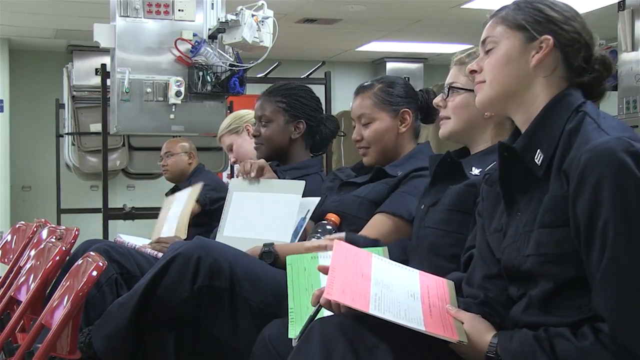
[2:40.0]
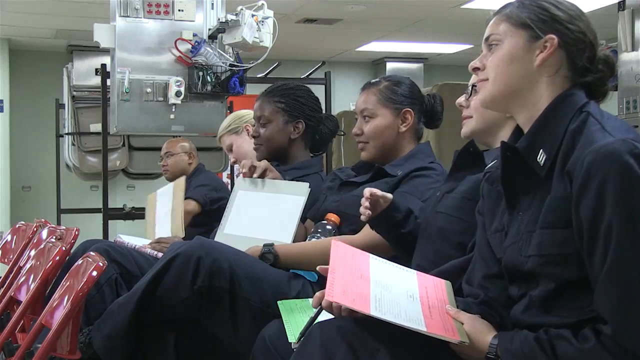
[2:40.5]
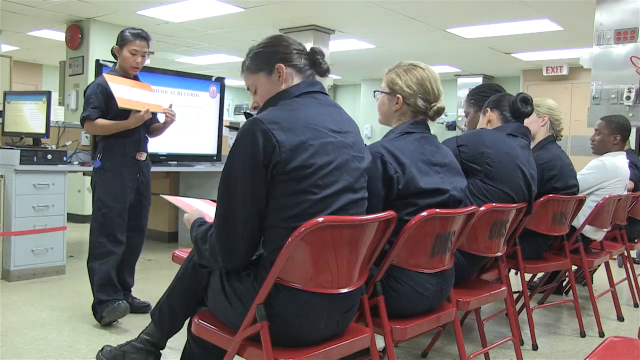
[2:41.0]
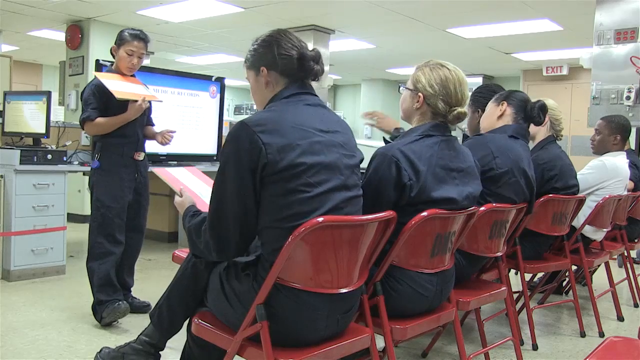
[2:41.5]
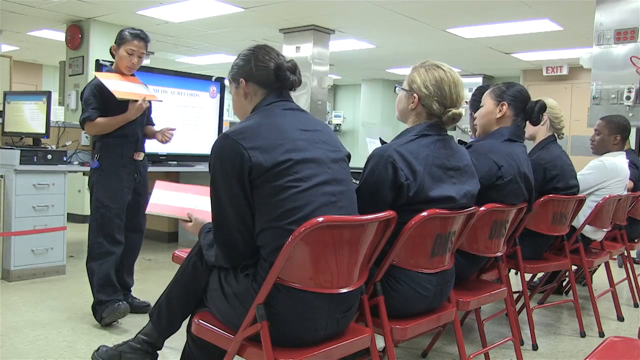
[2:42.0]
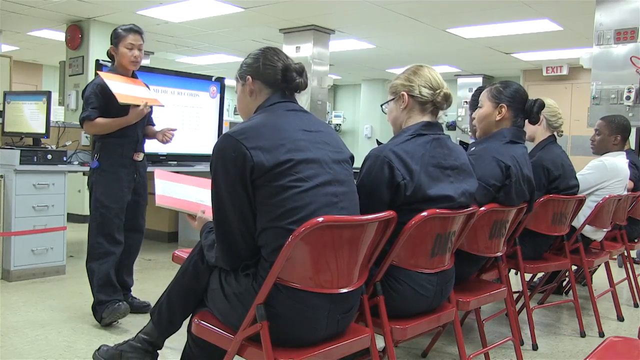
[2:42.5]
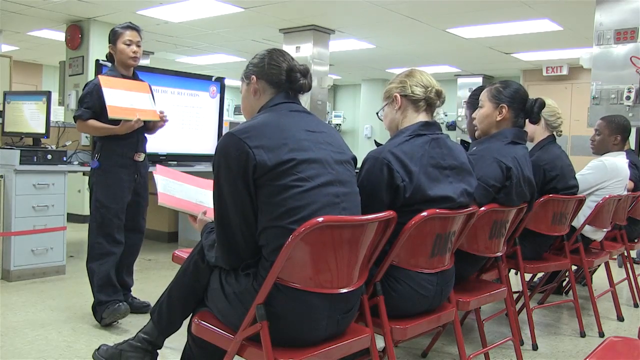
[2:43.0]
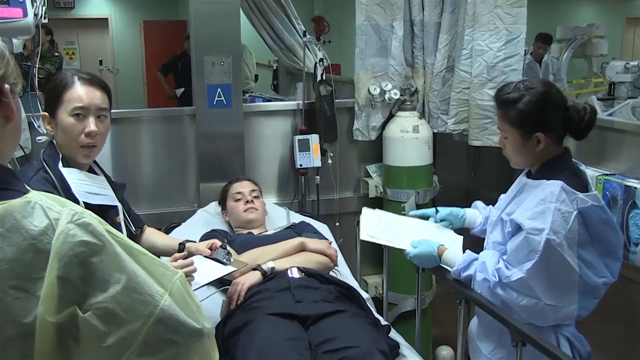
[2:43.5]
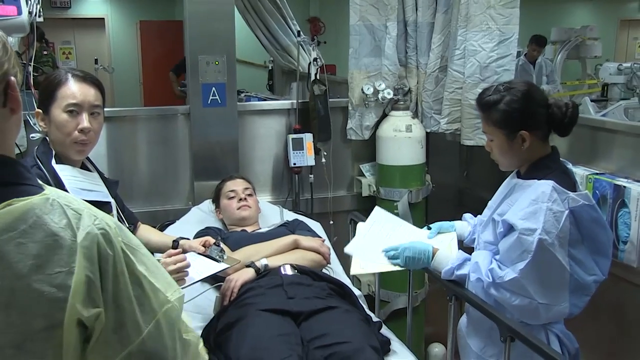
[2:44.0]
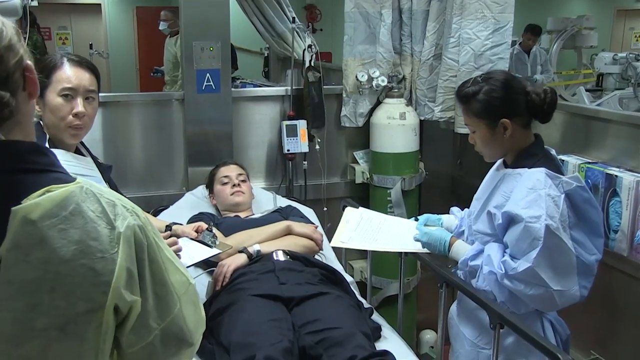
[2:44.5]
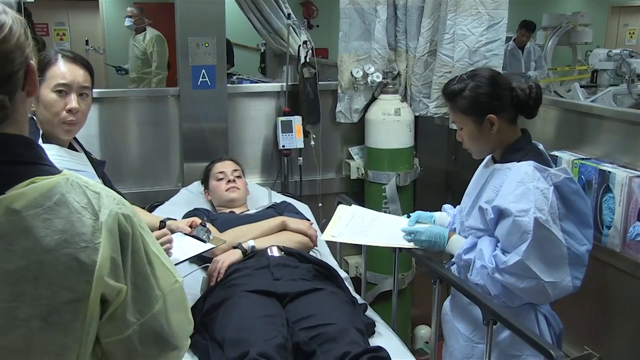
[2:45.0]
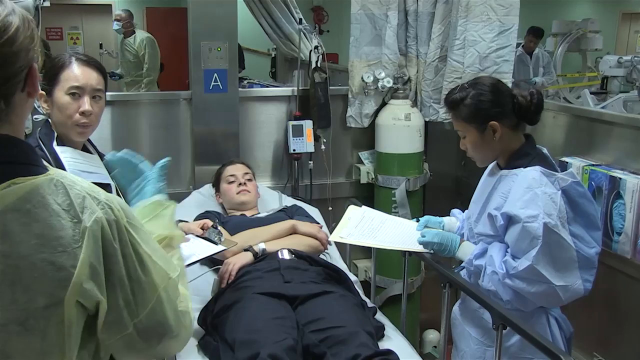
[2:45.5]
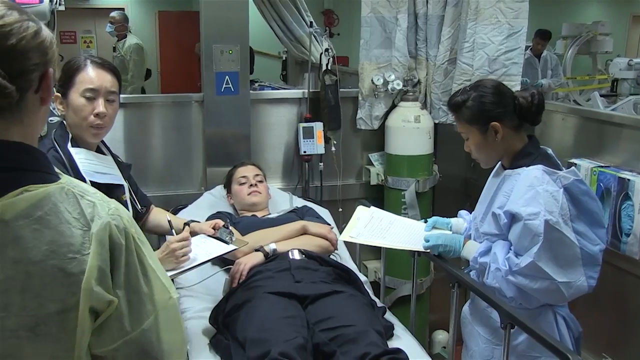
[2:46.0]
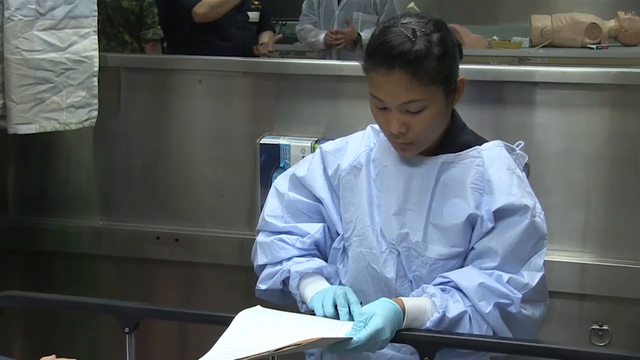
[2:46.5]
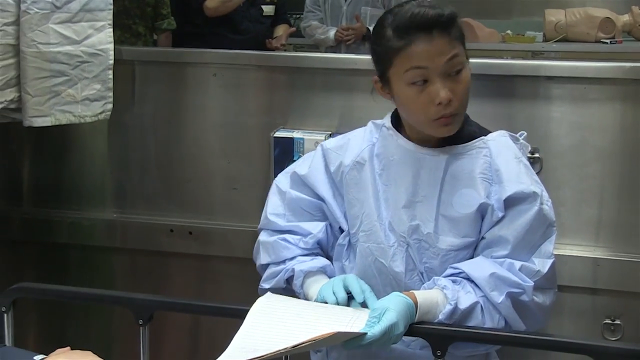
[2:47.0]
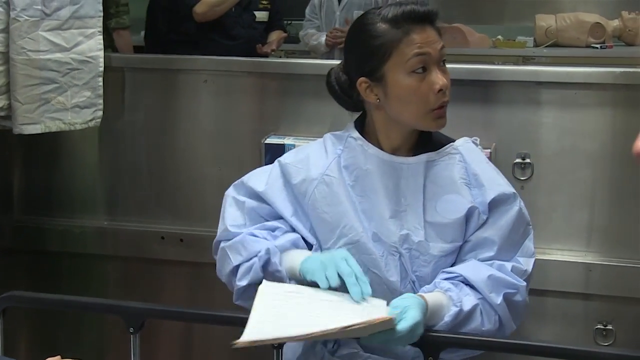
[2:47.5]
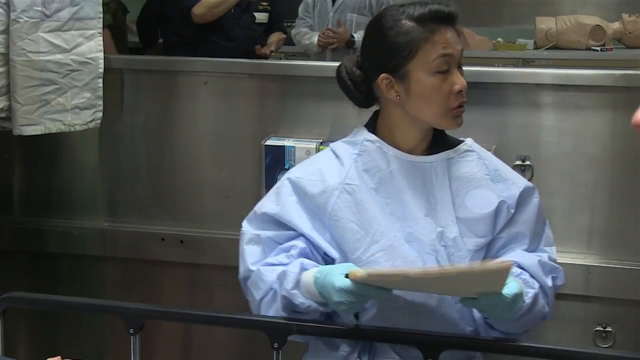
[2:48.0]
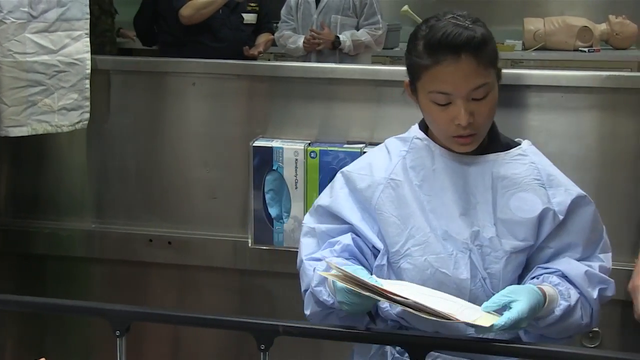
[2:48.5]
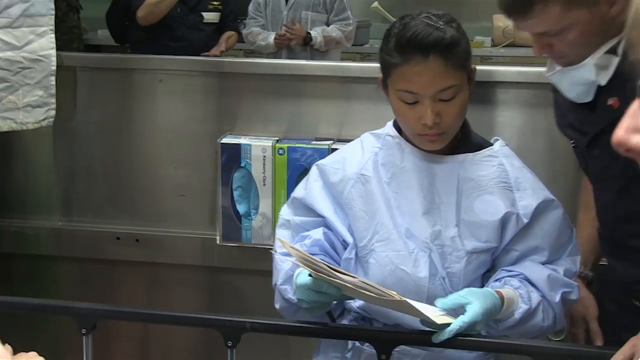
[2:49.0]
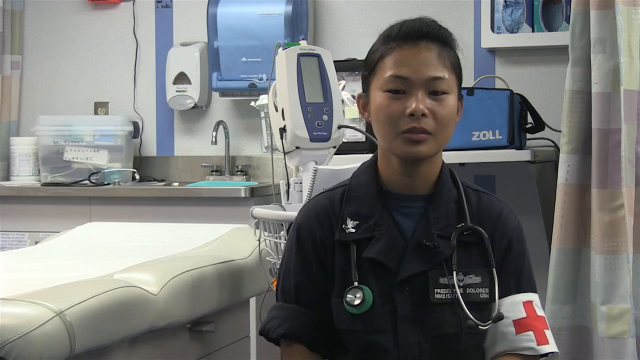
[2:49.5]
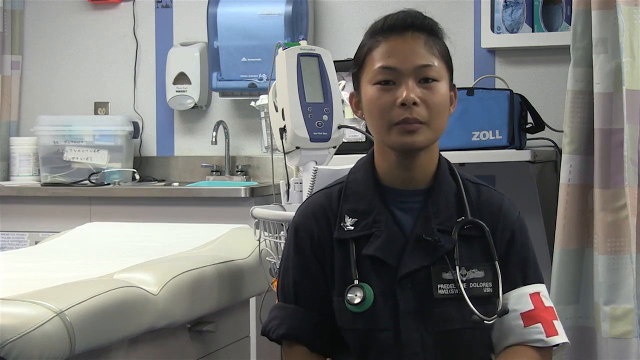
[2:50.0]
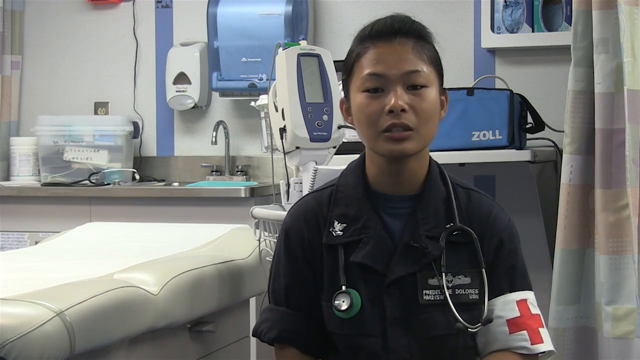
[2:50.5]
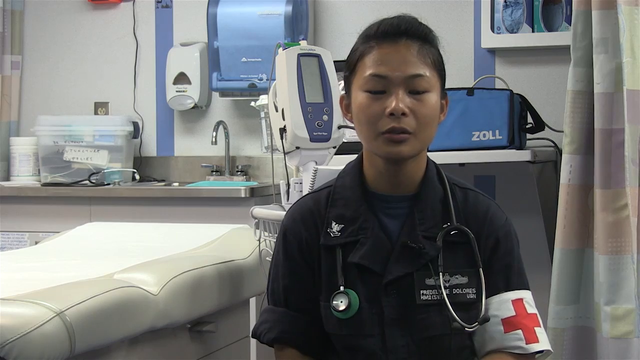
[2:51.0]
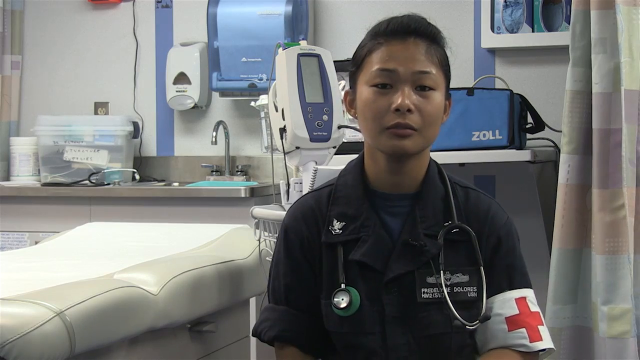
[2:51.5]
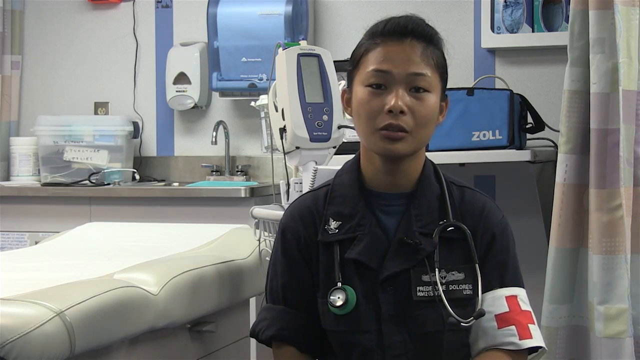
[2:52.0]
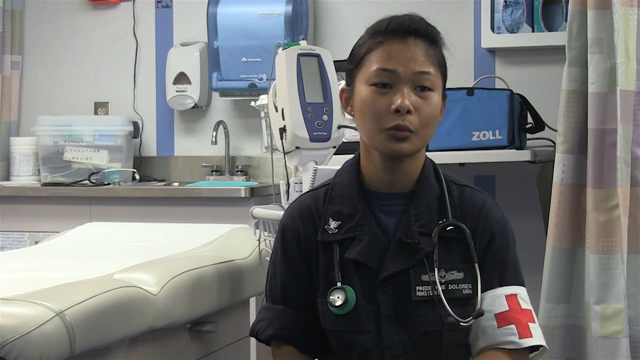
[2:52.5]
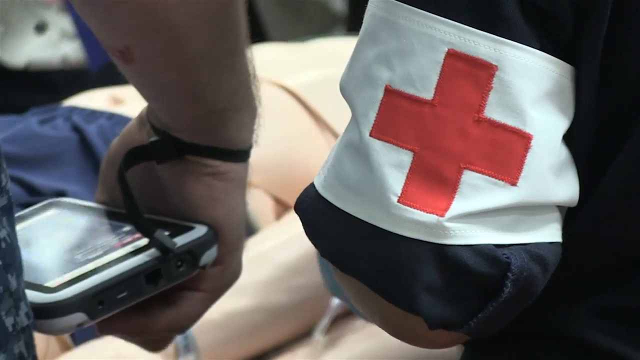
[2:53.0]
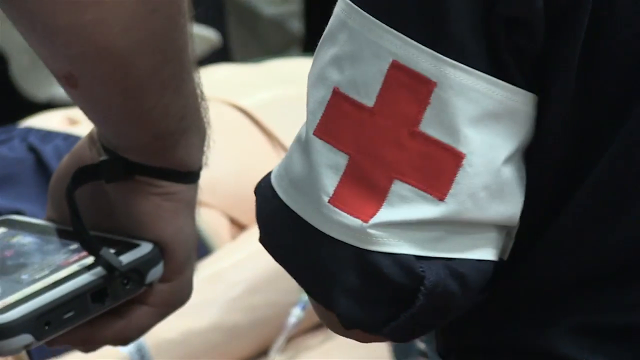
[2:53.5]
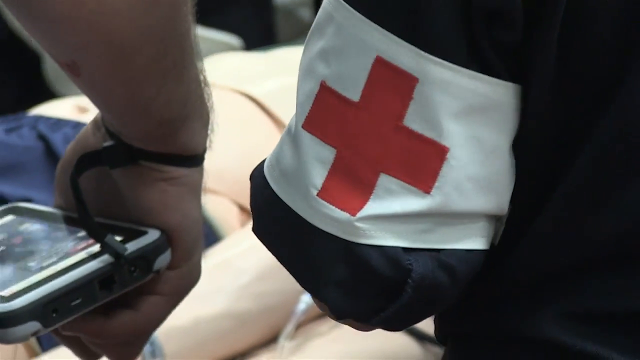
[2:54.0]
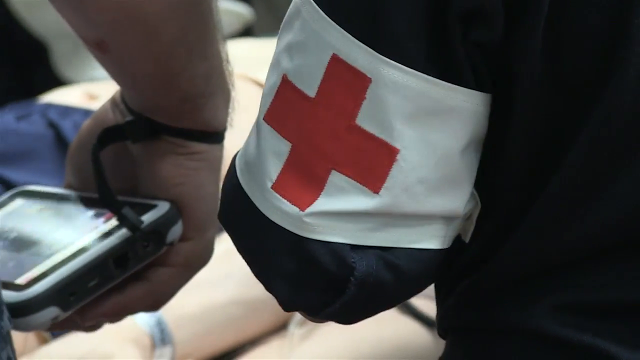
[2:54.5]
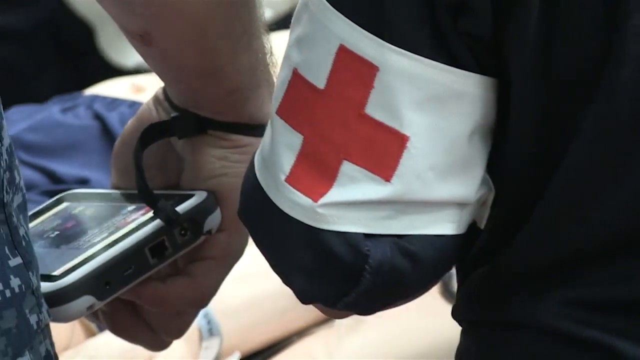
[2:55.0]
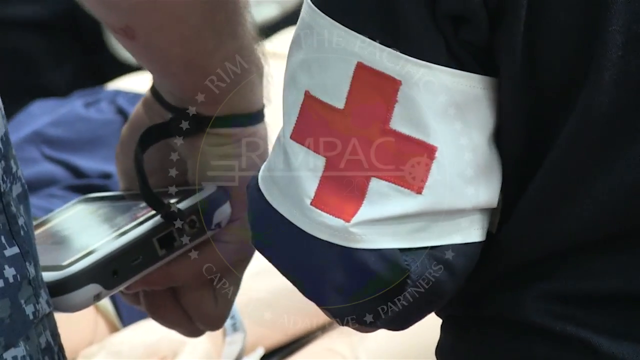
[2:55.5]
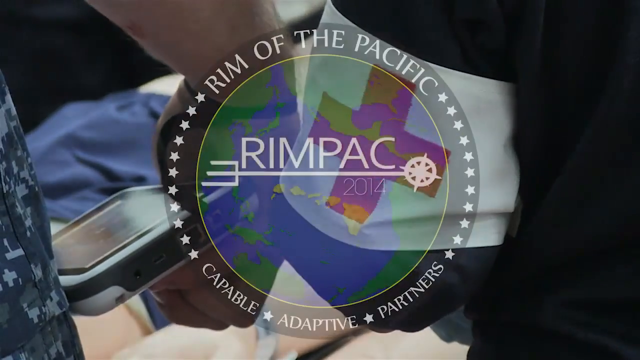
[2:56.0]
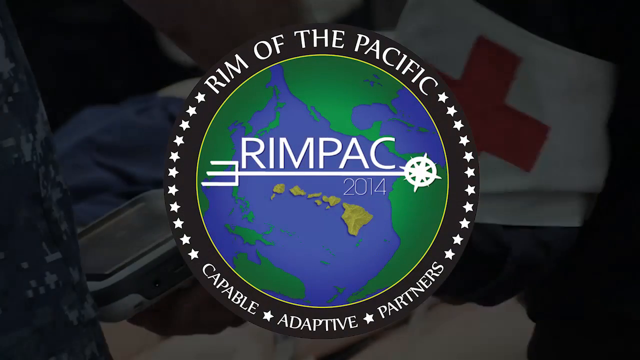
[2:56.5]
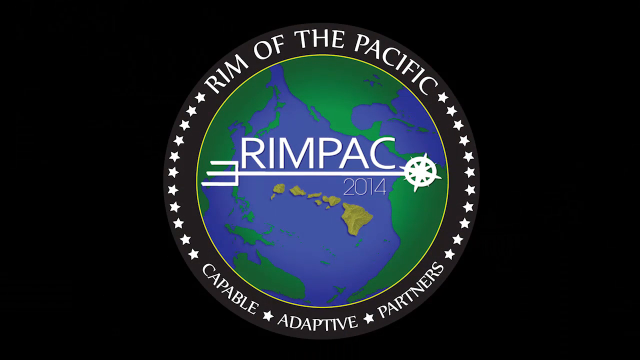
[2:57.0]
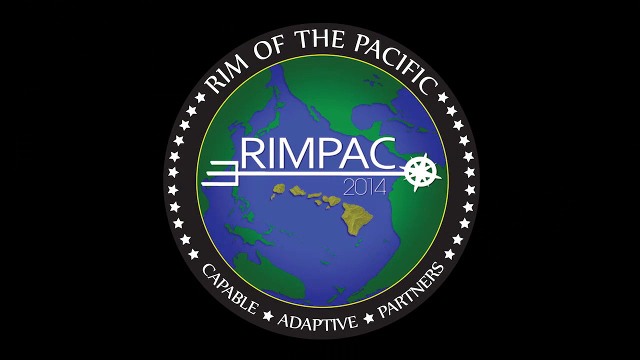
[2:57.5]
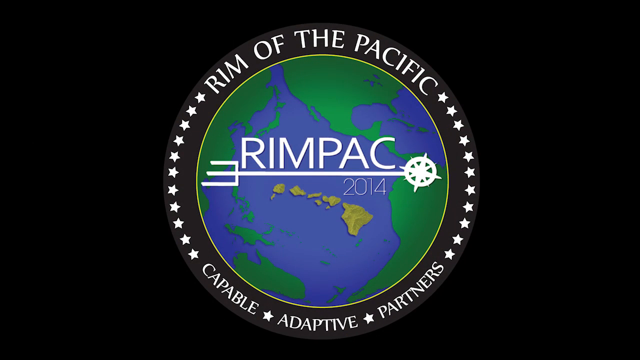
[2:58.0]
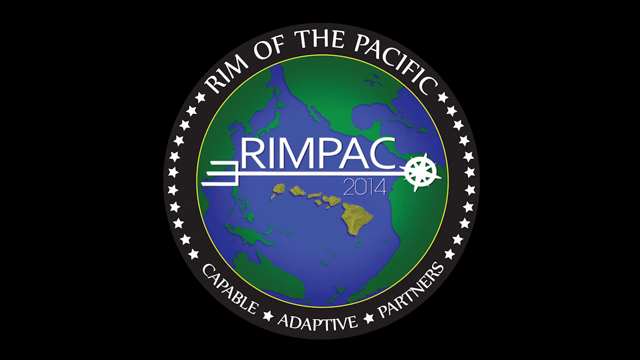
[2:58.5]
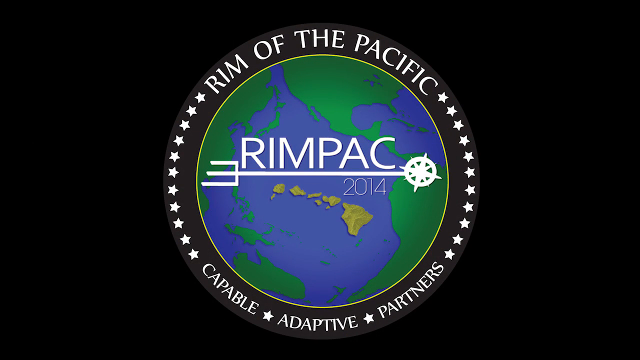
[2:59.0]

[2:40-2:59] Crew members or medical staff attend Fredalyne's advancement class. She points something out on what looks like a board or some kind of visual, and the students look down at their copies of it. Then Fredalyne, in her scrubs again, looks at some paperwork and discusses it with a couple of other medical personnel. The video ends with a sign that says "Rim of the Pacific, RimPack 2014, capable adaptive partners".